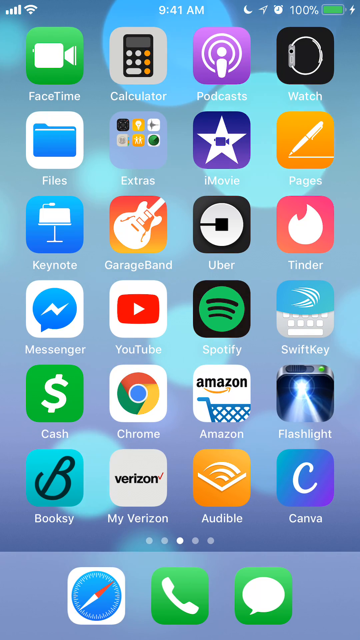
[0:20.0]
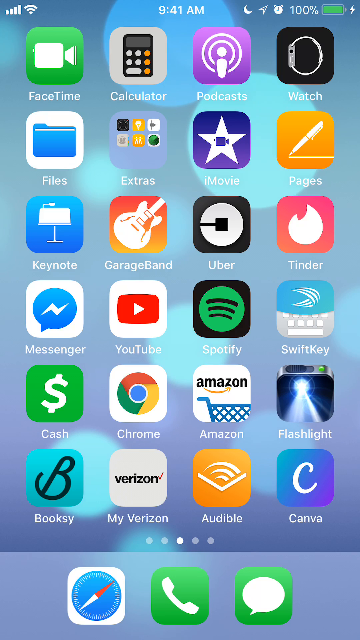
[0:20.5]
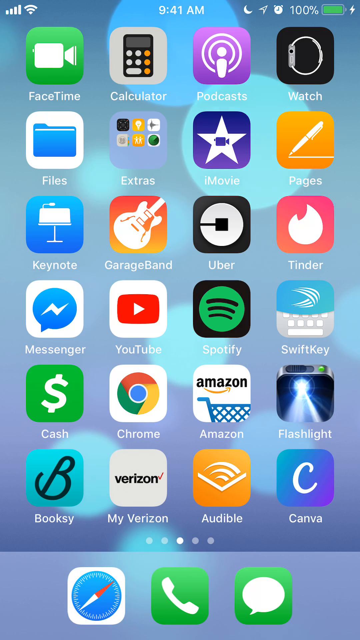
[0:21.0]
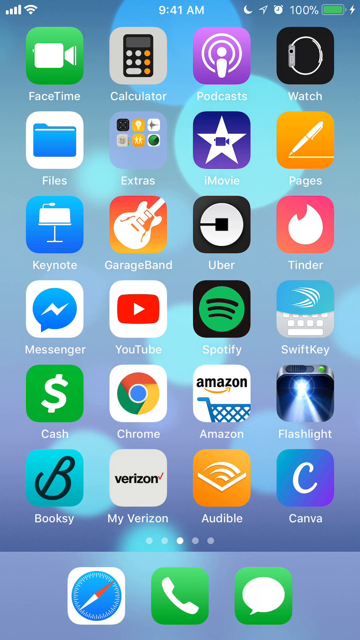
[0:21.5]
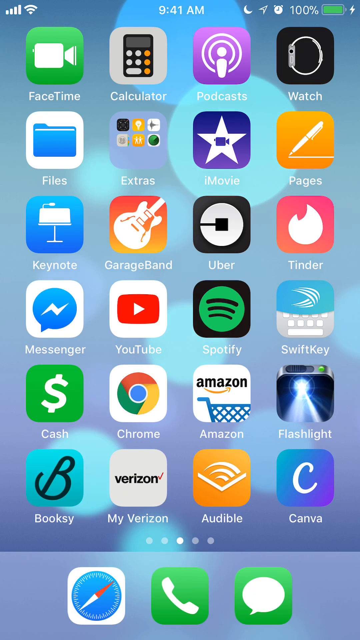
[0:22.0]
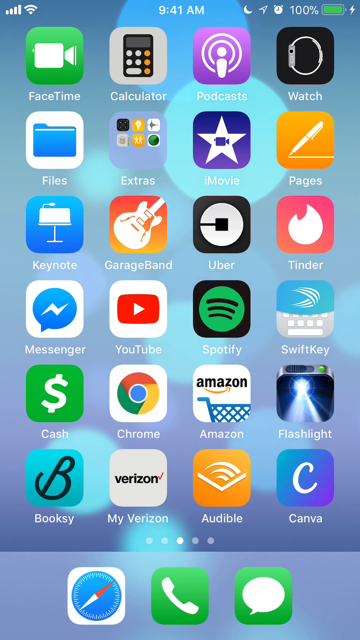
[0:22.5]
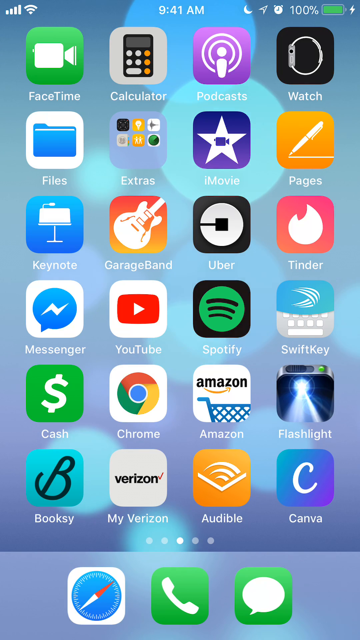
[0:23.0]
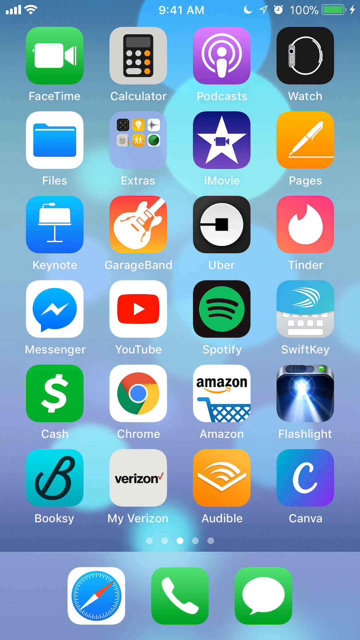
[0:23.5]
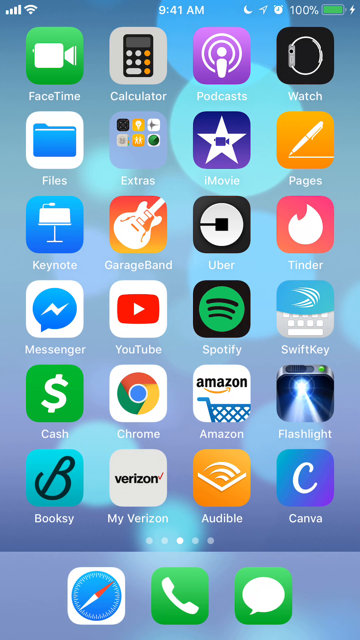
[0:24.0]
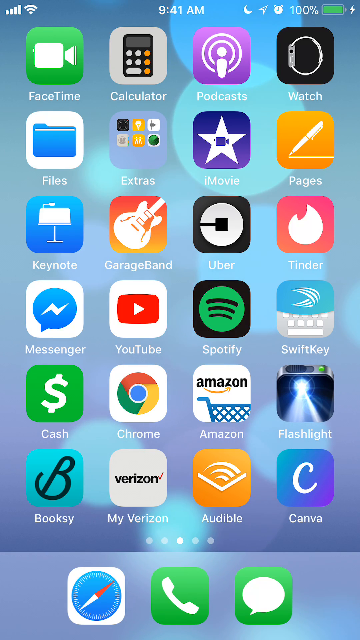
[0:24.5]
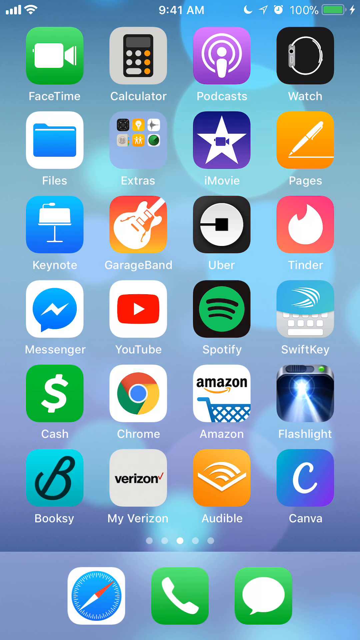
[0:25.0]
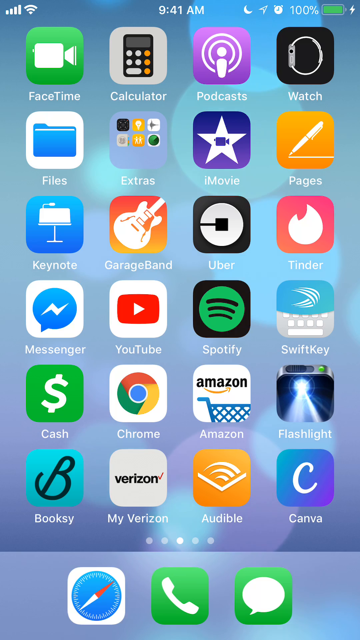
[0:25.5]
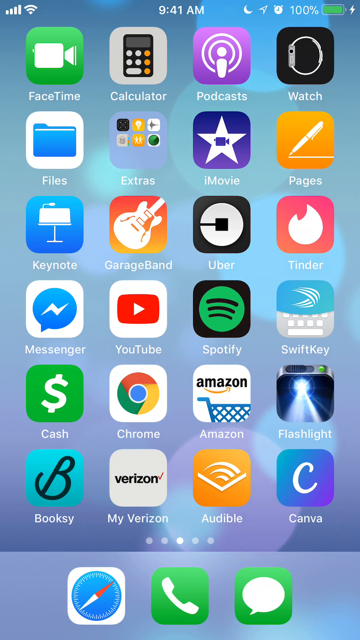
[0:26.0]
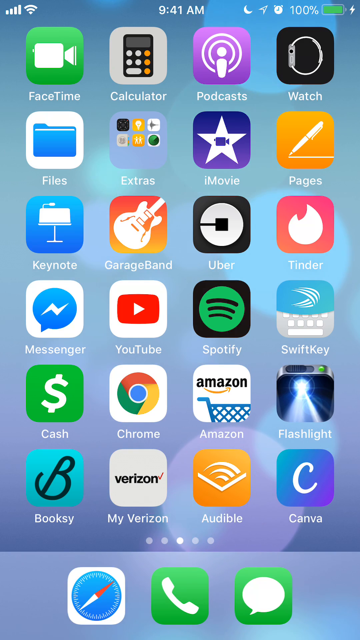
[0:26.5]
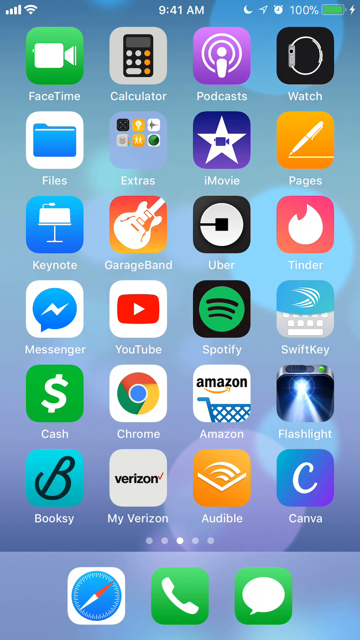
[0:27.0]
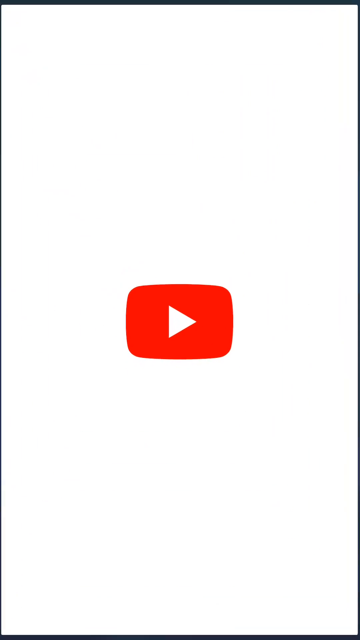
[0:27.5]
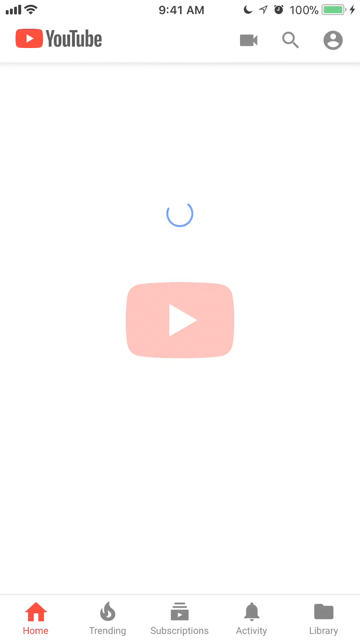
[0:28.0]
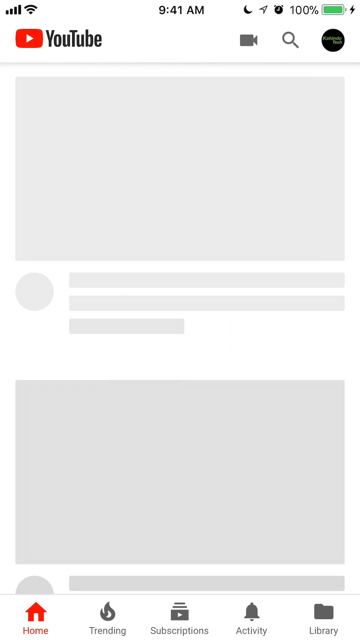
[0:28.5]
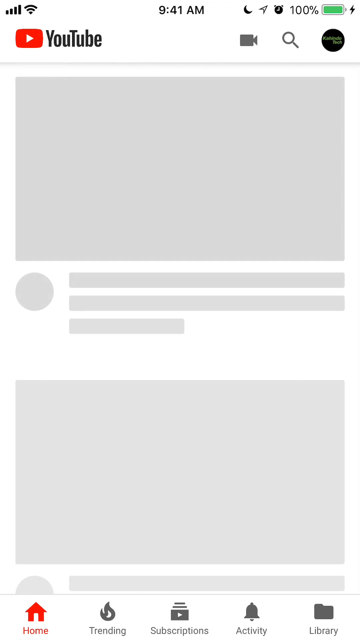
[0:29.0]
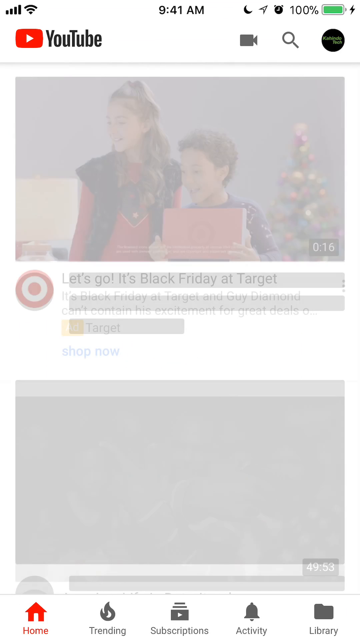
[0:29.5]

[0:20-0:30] One of the home screens on a smartphone shows over a dozen apps. They include FaceTime, Calculator, Podcasts, Watch (the smartwatch shortcut), Files (the files menu), Extras (a folder with several other apps in it), iMovie, Pages, Keynote, GarageBand, Uber, Tinder, Messenger (Facebook Messenger), YouTube, Spotify, SwiftKey, a flashlight shortcut, Amazon, Google Chrome, Cash App, Booksy, My Verizon, Audible and Canva. Across the bottom of the screen are three apps: the Safari web browser, the phone app and the Messenger app.